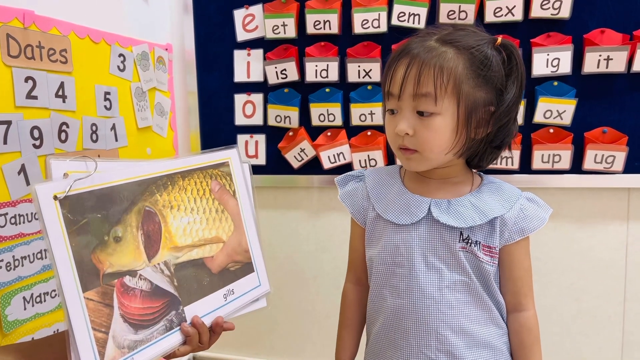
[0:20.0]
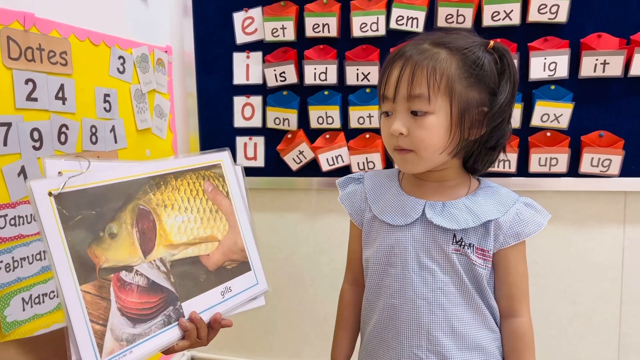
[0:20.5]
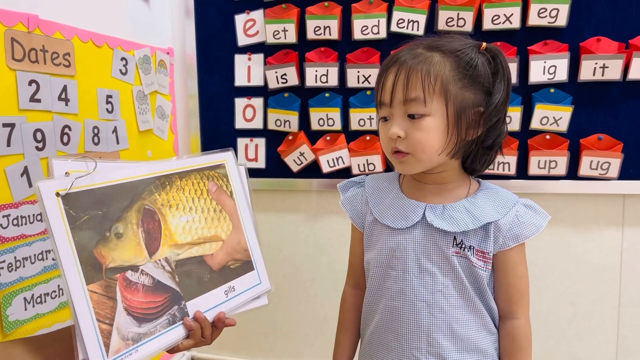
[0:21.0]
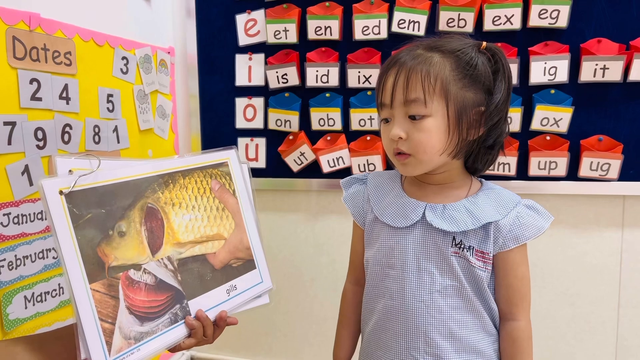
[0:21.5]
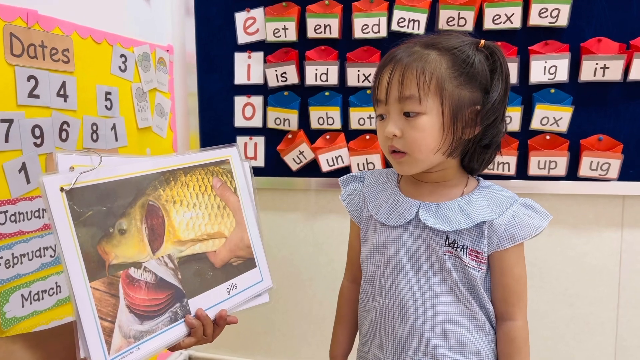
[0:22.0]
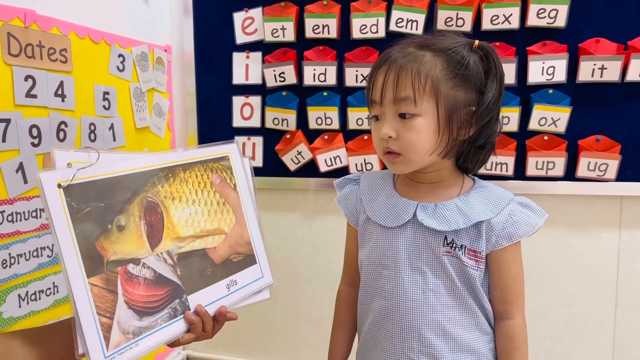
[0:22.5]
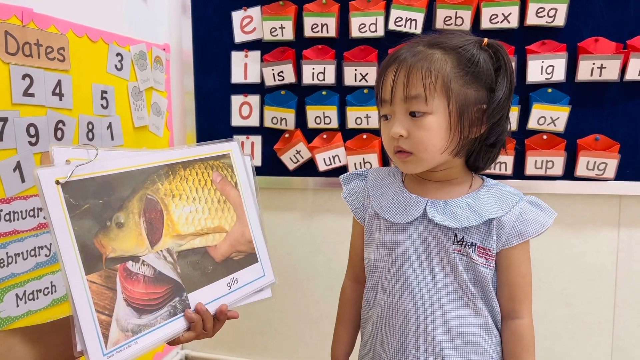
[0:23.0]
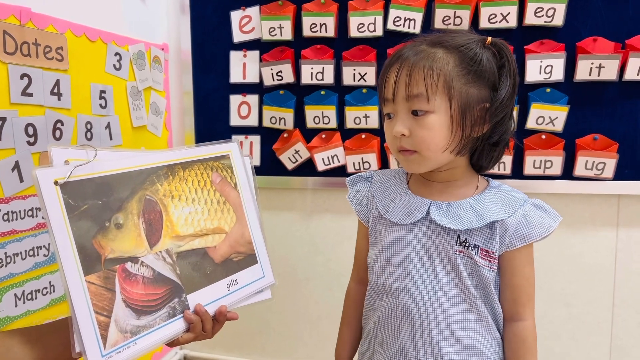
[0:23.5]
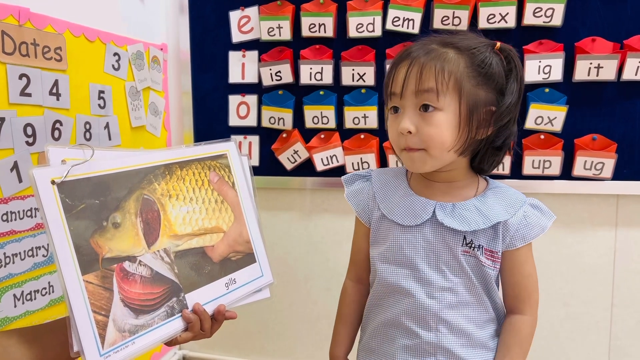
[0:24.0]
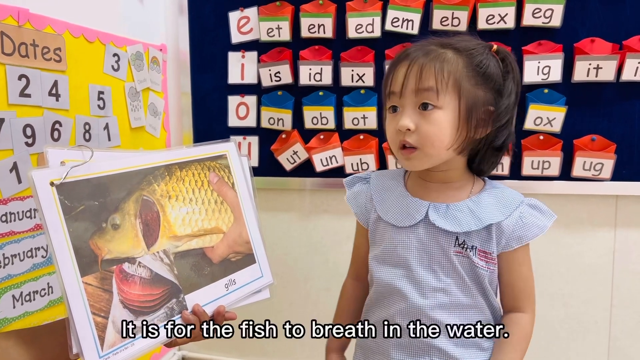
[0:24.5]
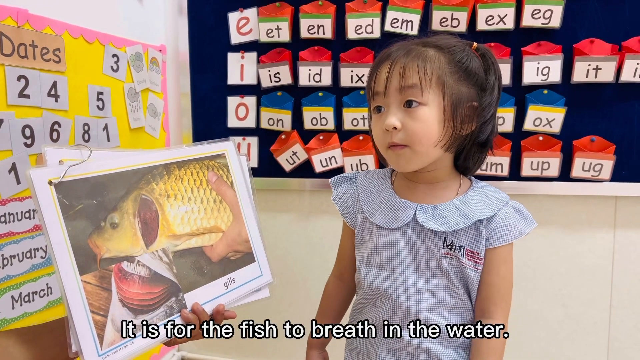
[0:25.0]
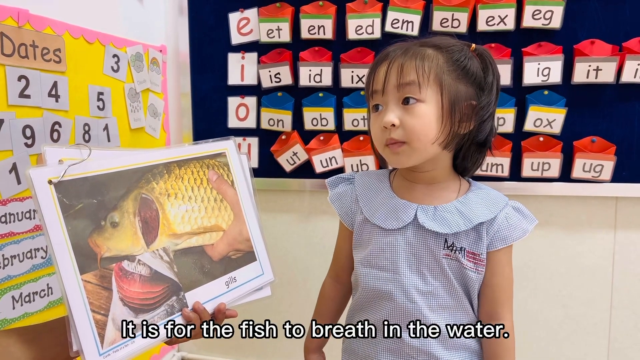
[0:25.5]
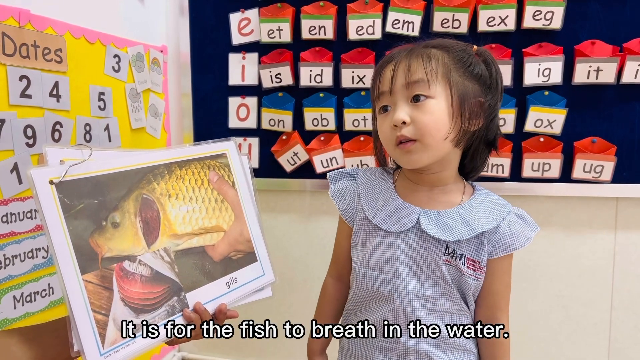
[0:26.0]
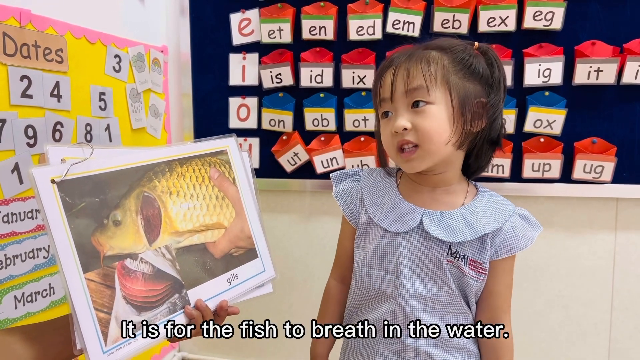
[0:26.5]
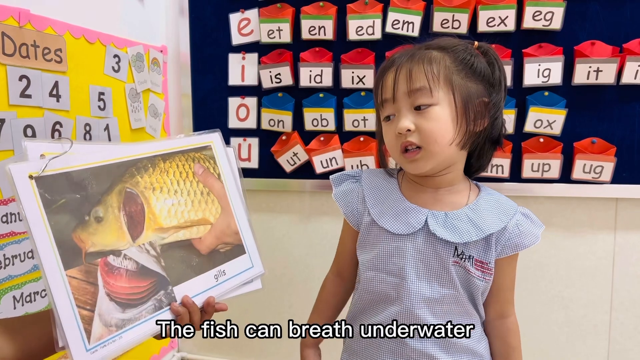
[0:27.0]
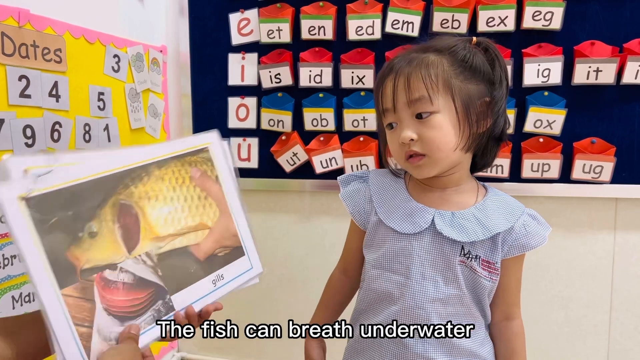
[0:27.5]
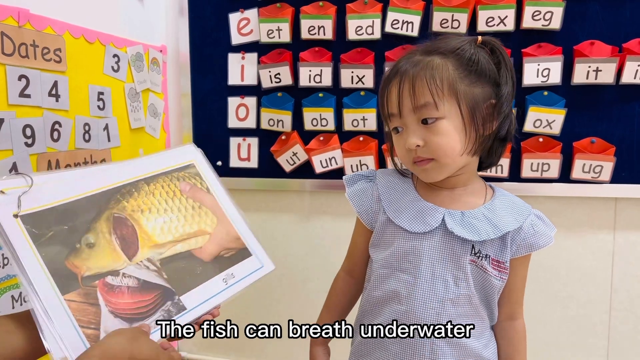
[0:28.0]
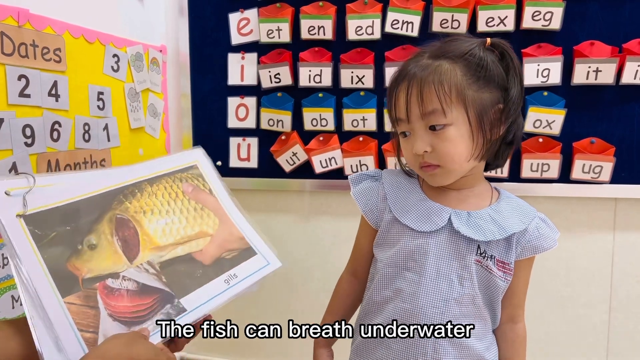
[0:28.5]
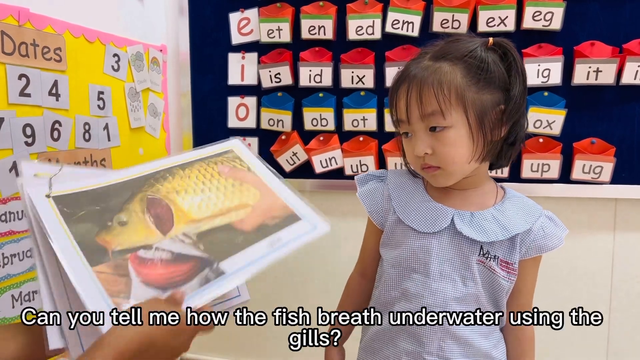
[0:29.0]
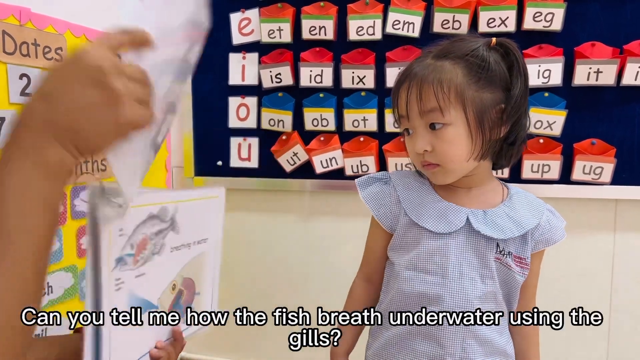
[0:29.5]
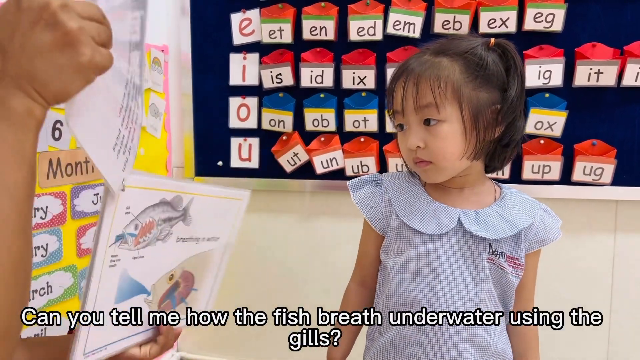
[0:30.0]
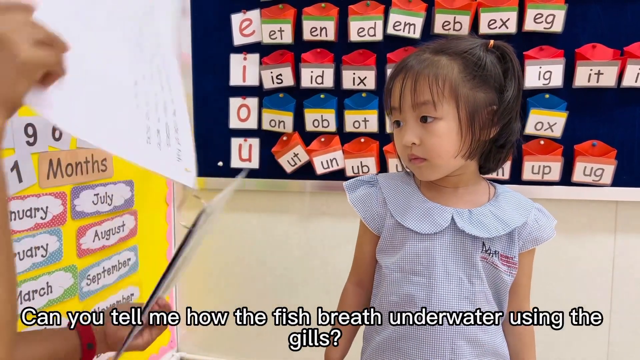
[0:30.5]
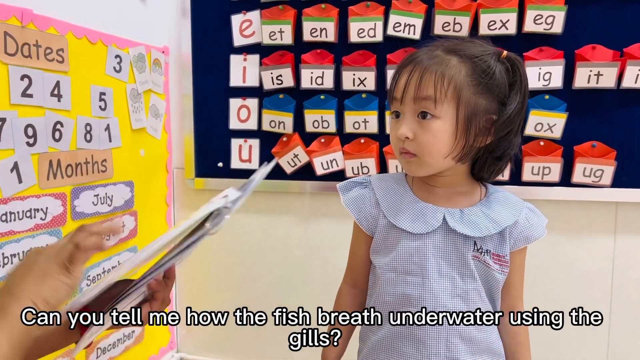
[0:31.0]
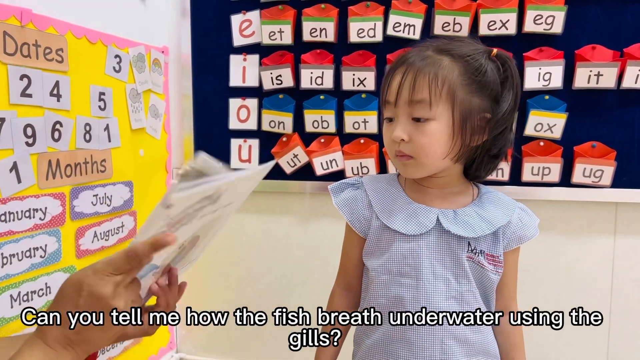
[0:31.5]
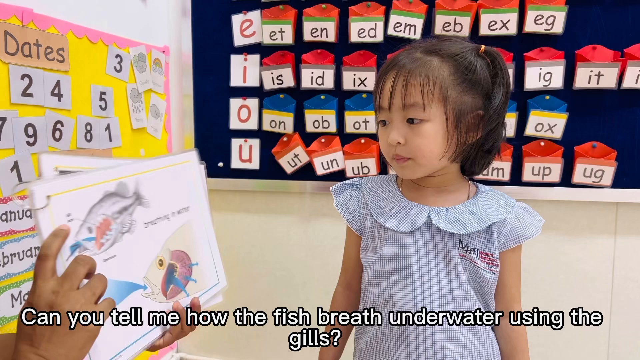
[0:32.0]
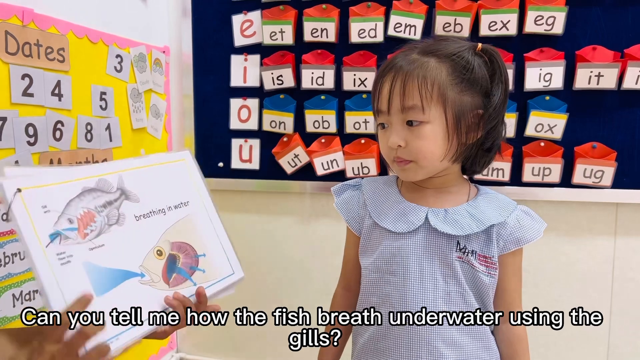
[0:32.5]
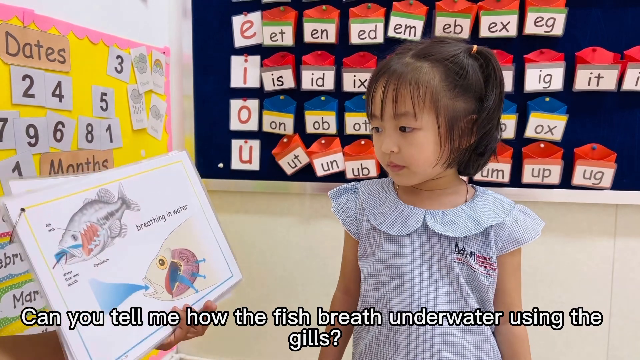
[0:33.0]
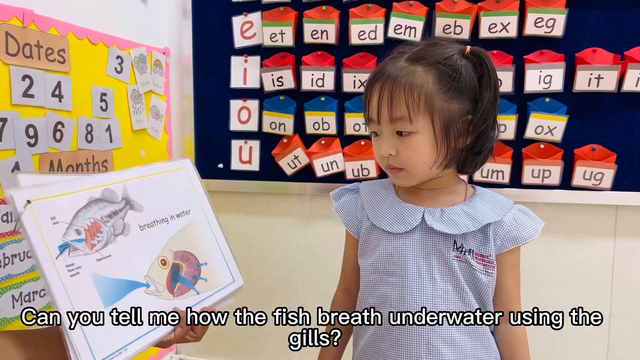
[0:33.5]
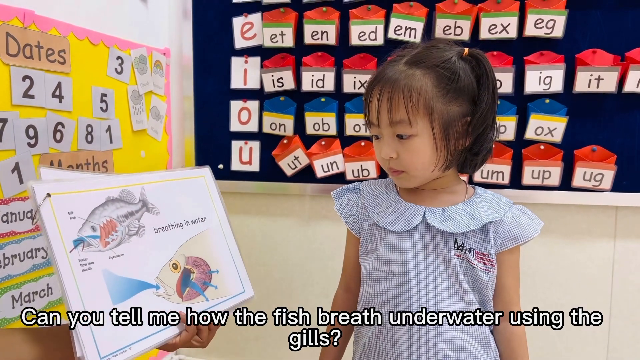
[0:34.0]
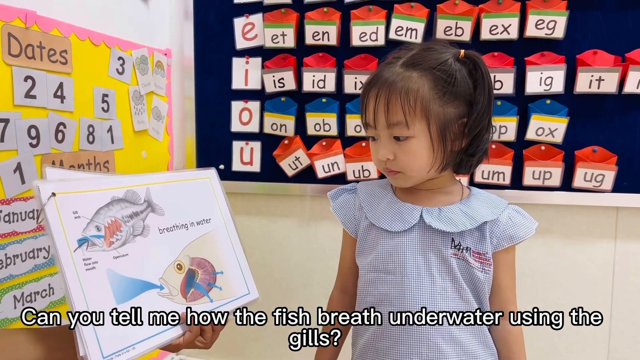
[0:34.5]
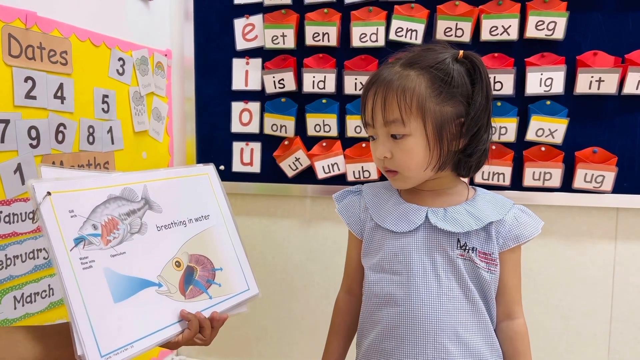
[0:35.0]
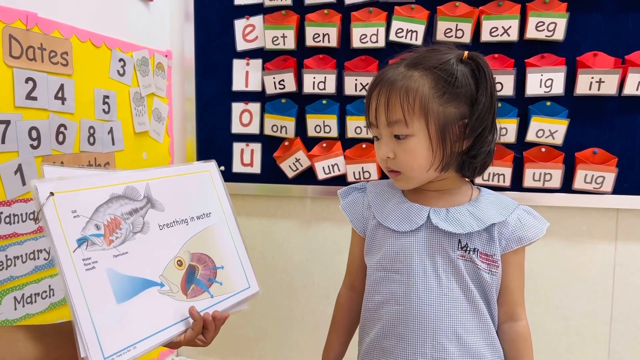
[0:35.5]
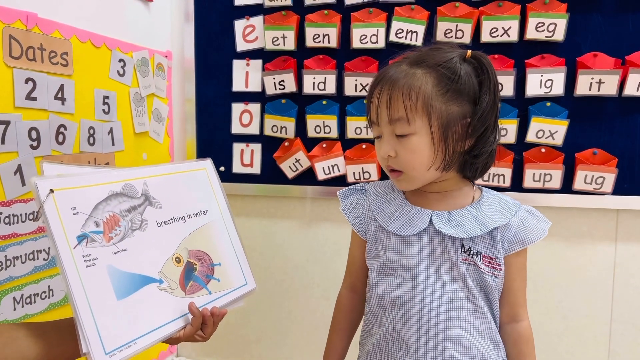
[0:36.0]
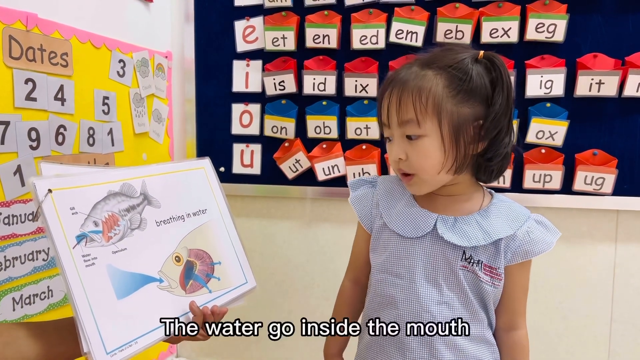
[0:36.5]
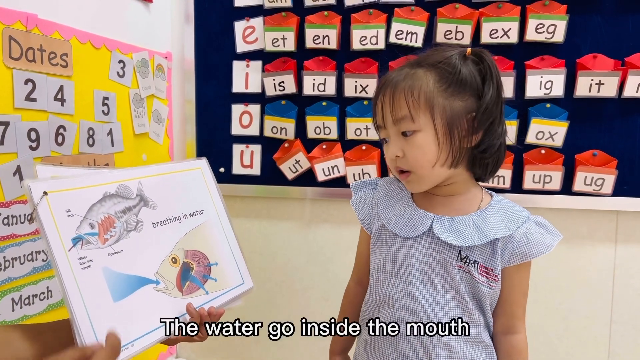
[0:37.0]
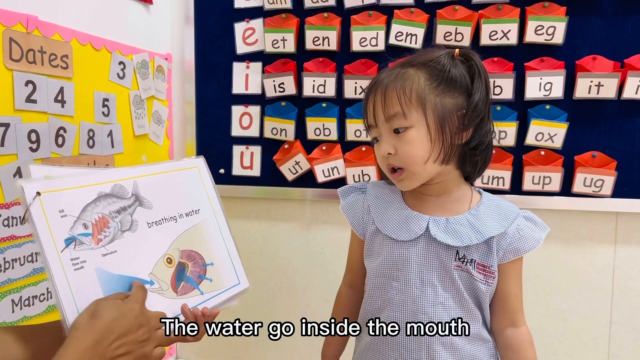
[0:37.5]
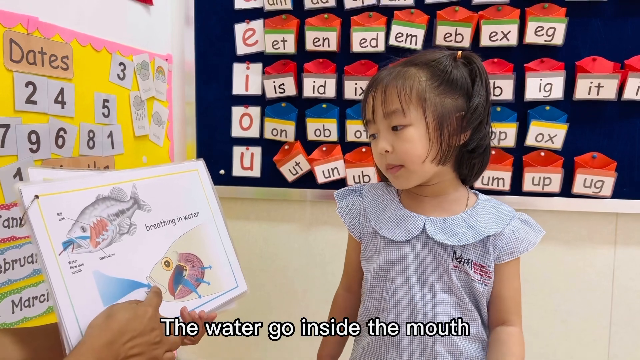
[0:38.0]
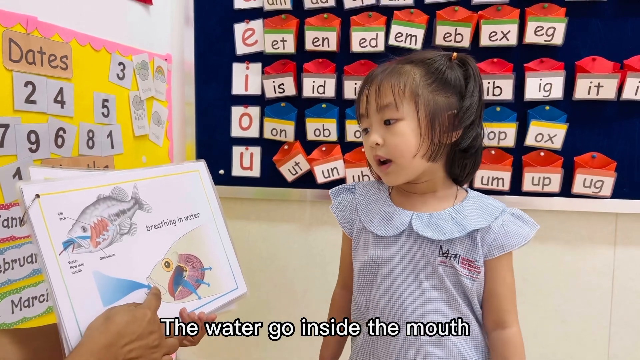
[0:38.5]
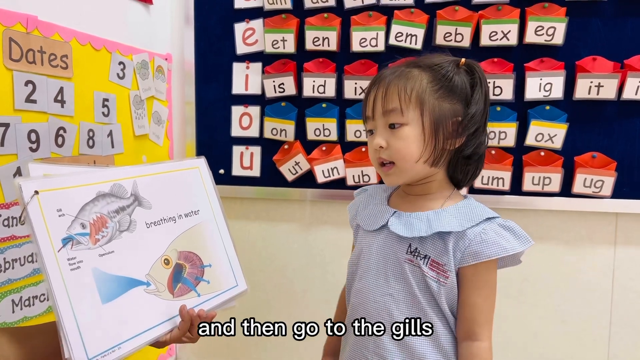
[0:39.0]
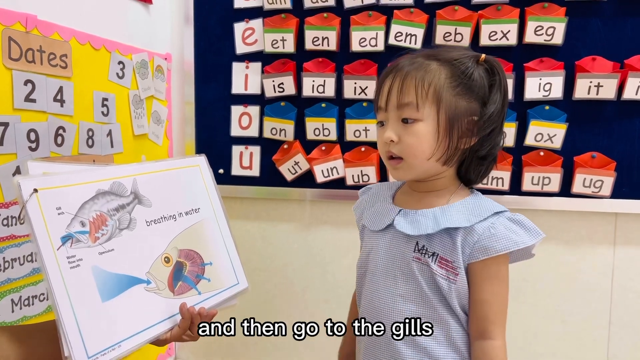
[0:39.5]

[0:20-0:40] The teacher shows Fifi, a young child, a picture of a fish and asks her to identify it, and she does so correctly. The teacher flips to another picture showing what looks like a dead fish with gaping gills, points to the hole and asks what it is; Fifi correctly says gills. Asked what gills are for, Fifi answers that they help the fish breathe underwater. The teacher flips to a third page with a more detailed scientific drawing of the process of fish breathing. Asked how gills work, Fifi answers that a fish draws water through its mouth and pushes it out through the gills.